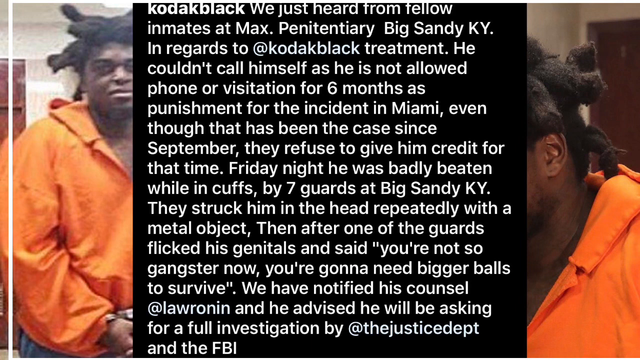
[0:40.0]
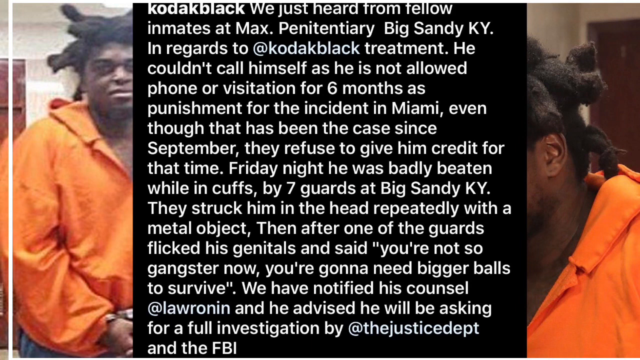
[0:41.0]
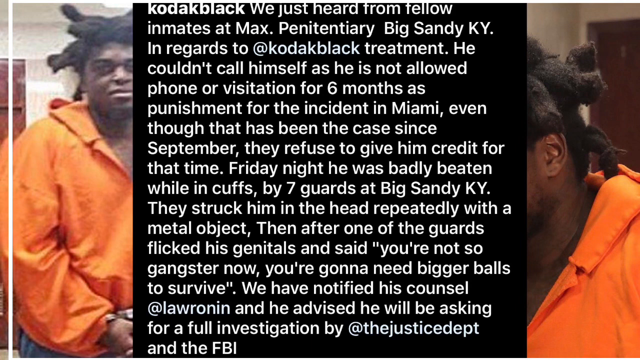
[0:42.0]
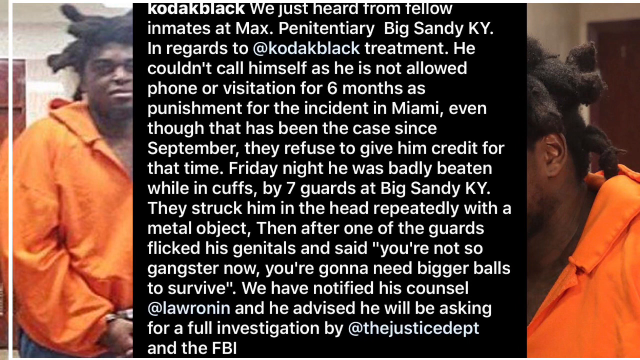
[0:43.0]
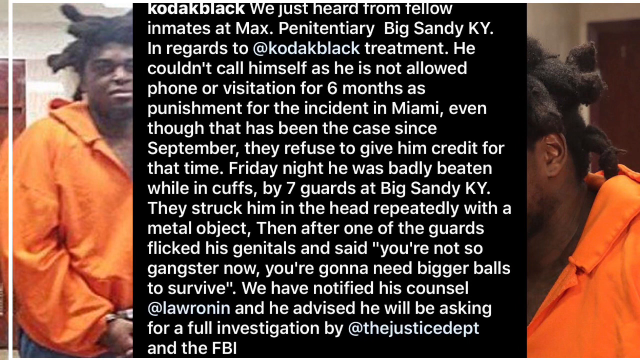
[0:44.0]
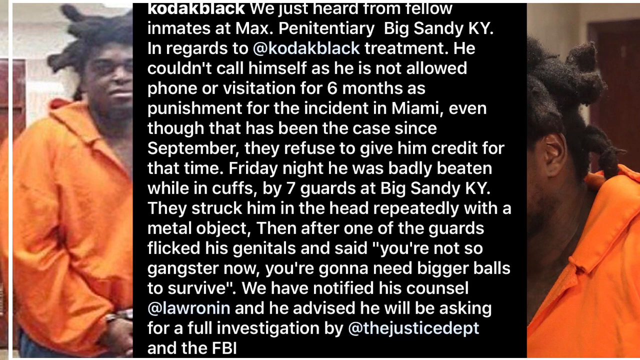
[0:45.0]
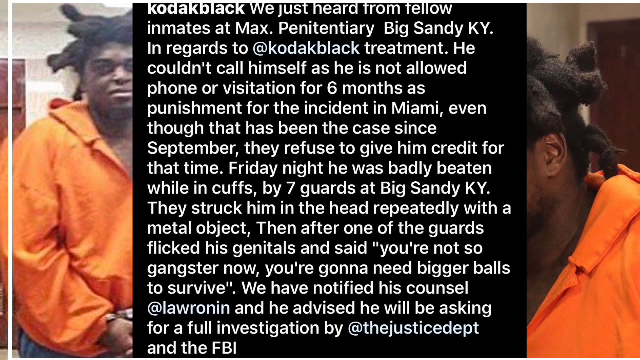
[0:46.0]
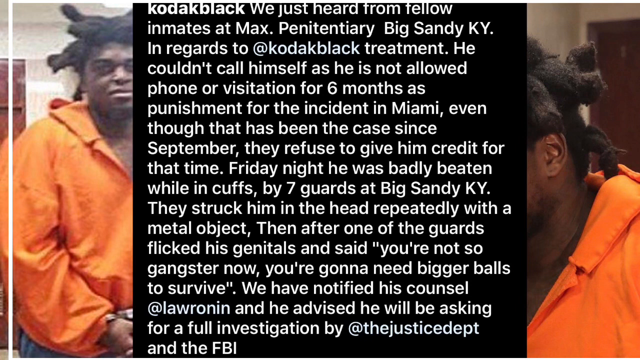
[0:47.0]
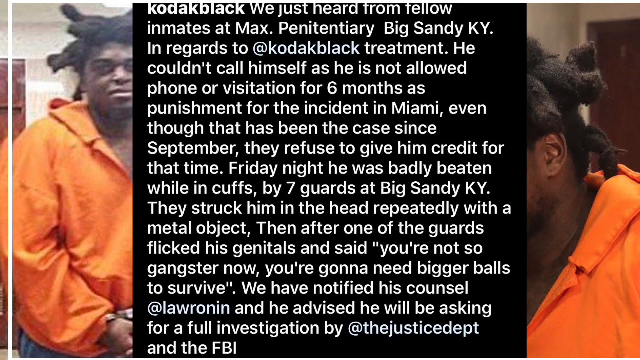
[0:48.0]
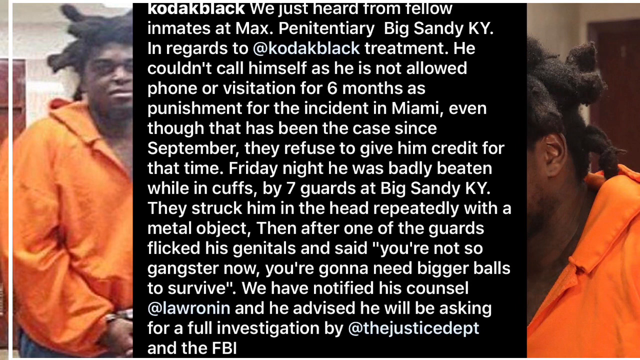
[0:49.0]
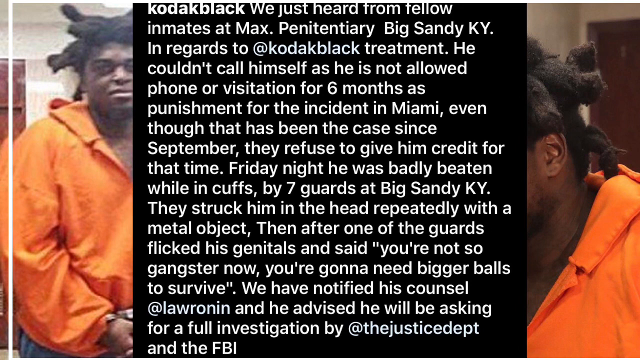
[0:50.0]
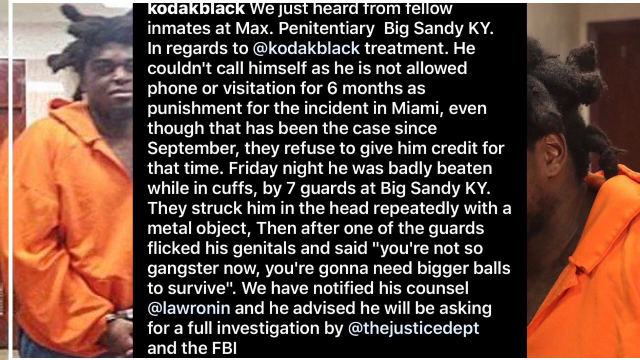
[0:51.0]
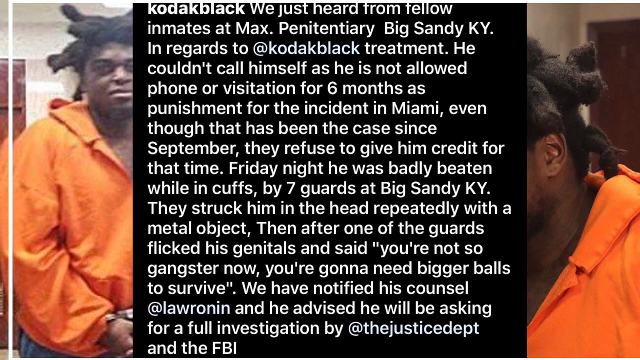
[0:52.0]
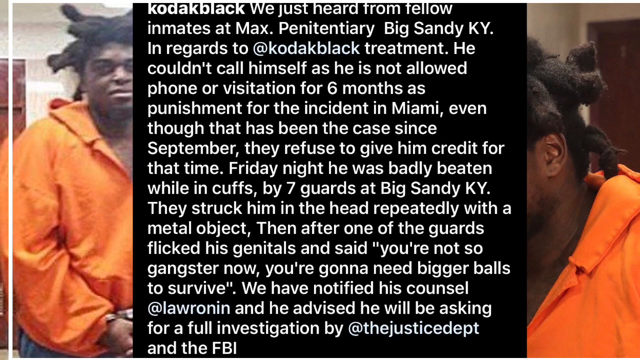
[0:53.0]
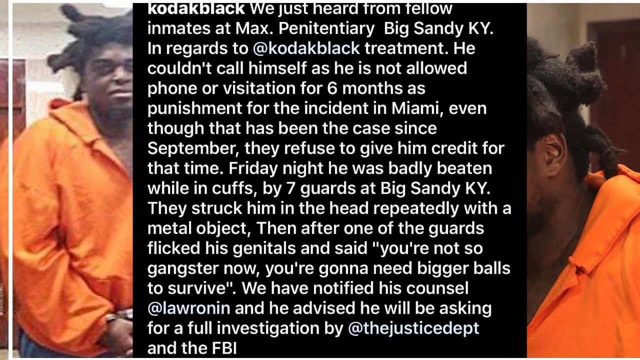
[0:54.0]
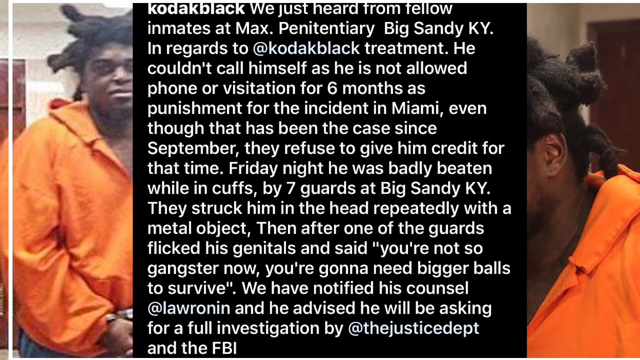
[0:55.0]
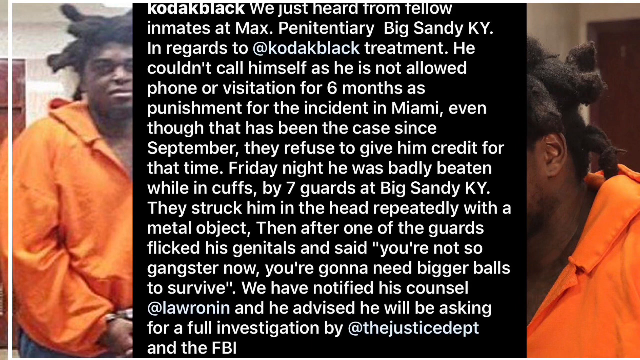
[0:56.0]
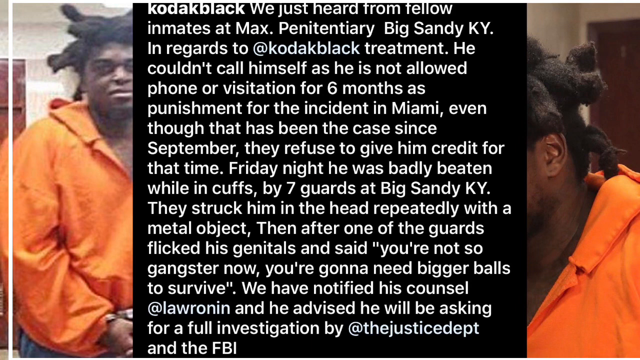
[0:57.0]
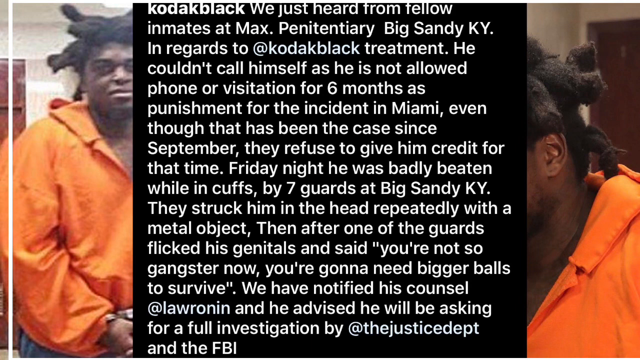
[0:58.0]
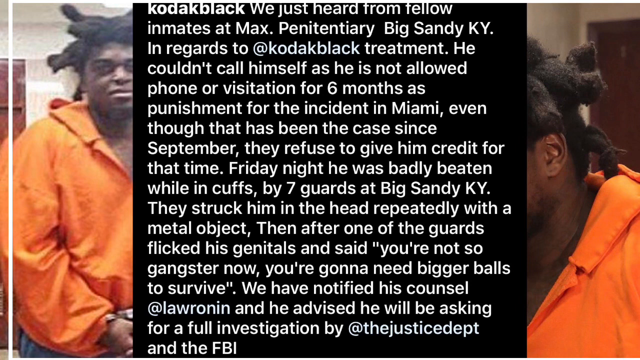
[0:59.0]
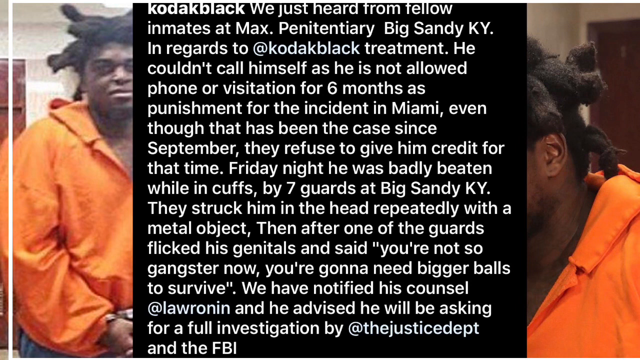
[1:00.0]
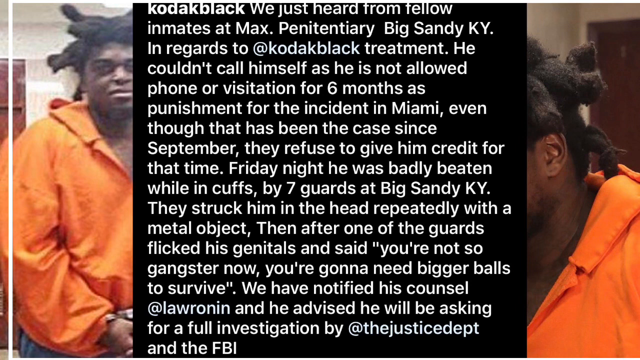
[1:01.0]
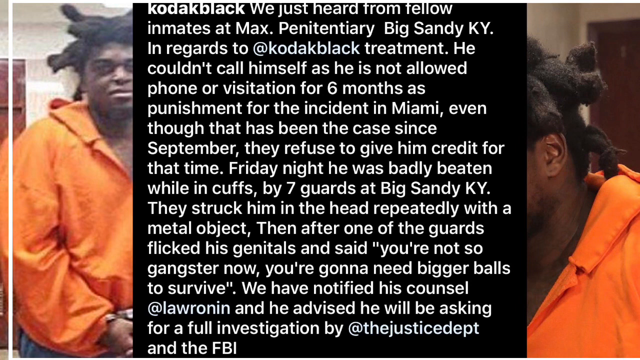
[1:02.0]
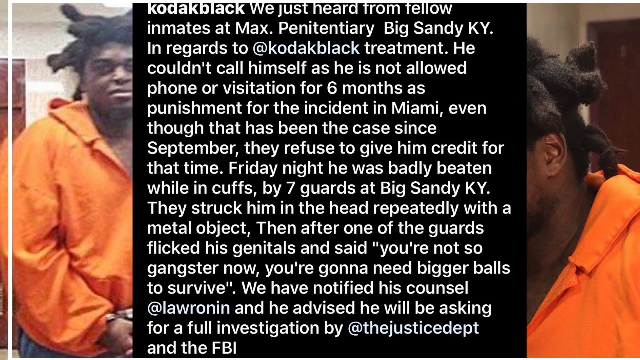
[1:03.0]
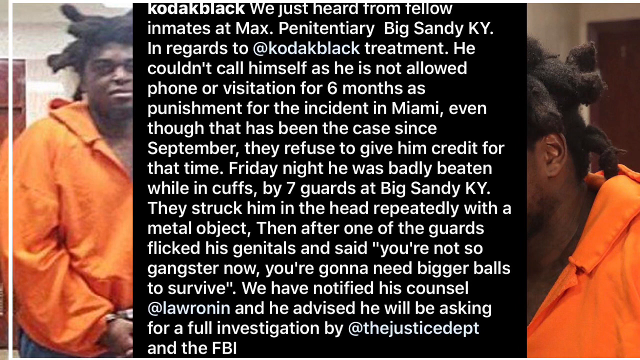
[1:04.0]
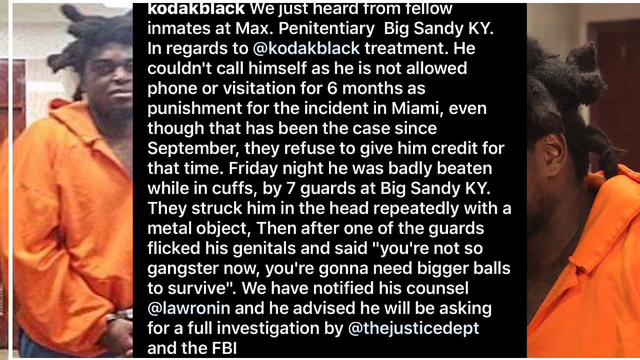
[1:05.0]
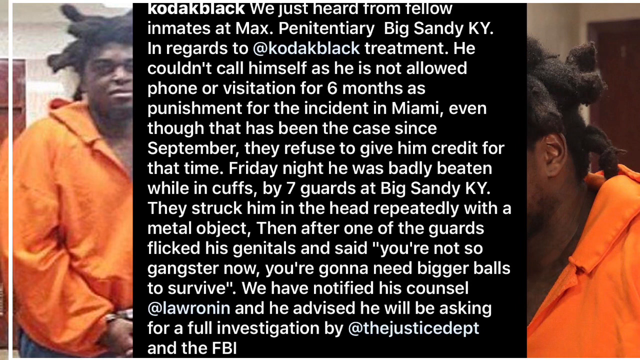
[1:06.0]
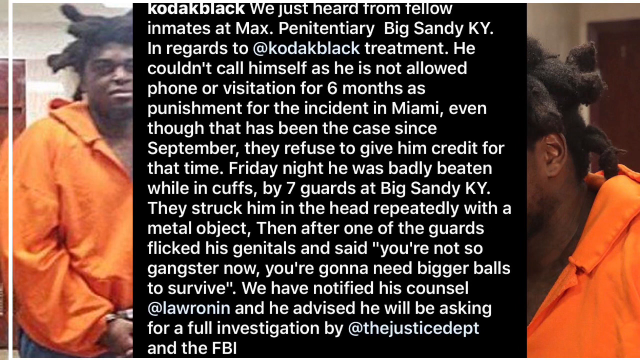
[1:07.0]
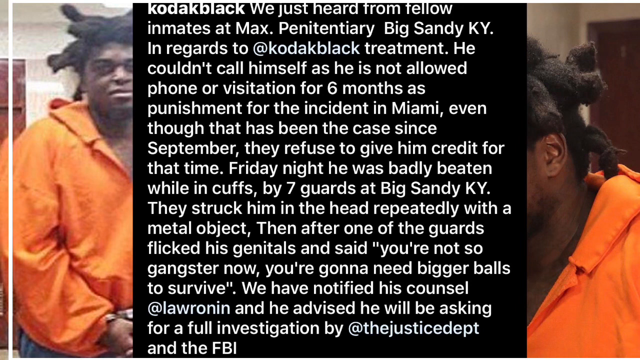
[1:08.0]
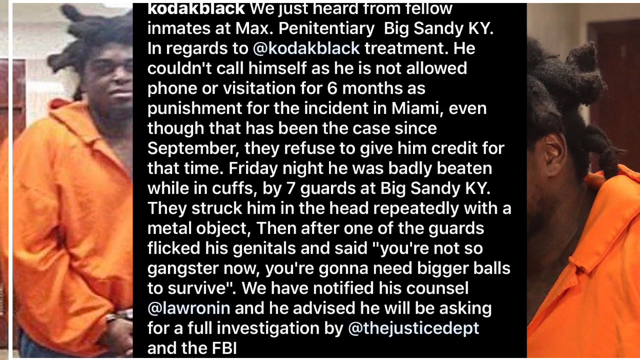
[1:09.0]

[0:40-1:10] The large block of text stays centered in the image: a black box with white text in the middle of the screen, with parts of the left and right images visible on either side. The image is static, with no animations or other graphics added, and nothing zooms or fades in or out. It apparently stays on screen for people to read and gain context about the situation the man in the orange suit is possibly in.